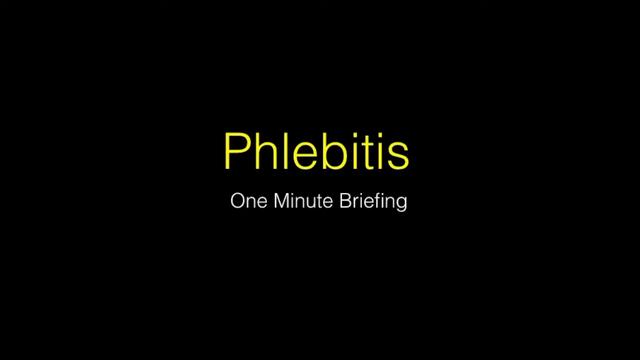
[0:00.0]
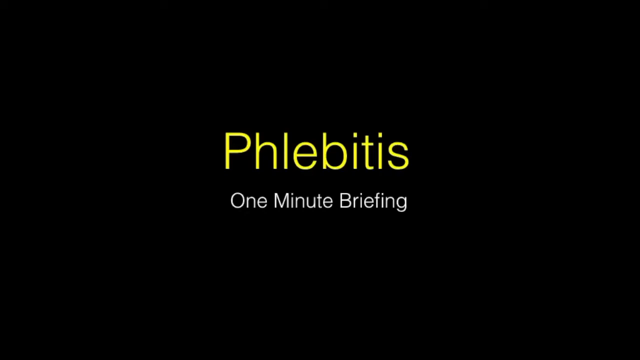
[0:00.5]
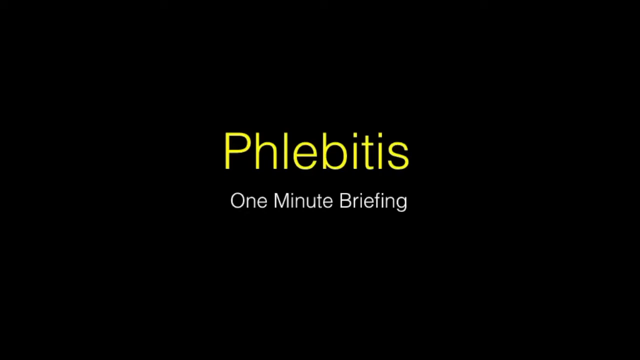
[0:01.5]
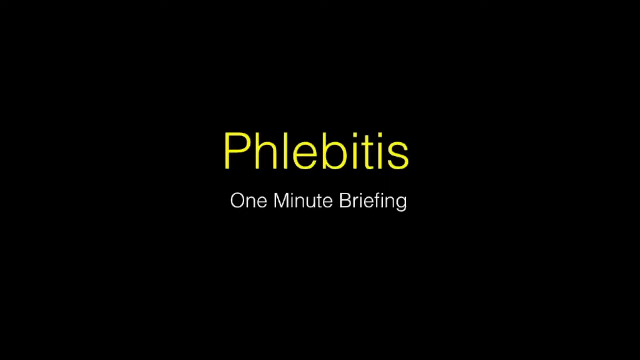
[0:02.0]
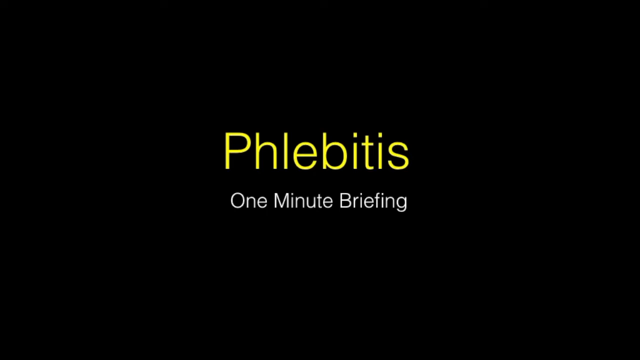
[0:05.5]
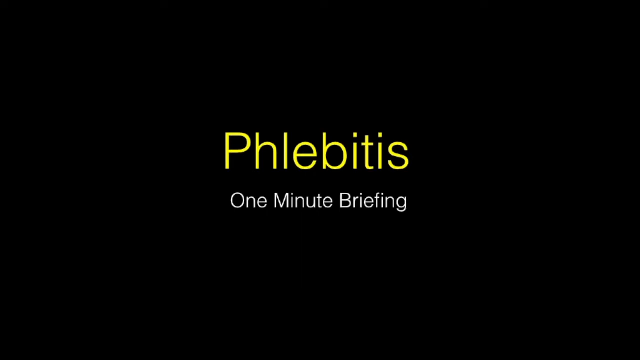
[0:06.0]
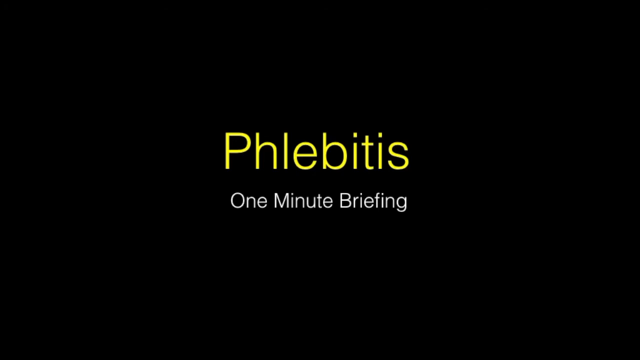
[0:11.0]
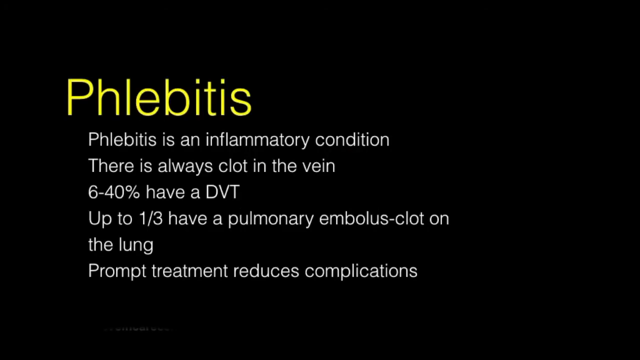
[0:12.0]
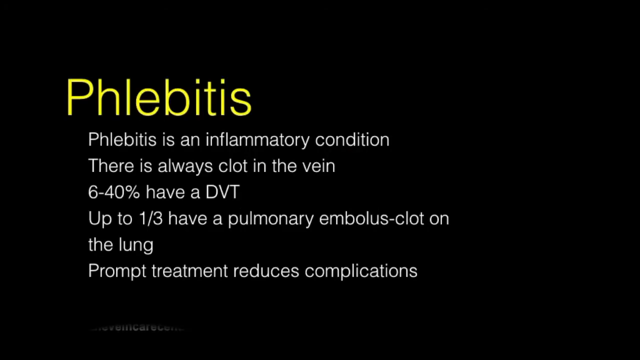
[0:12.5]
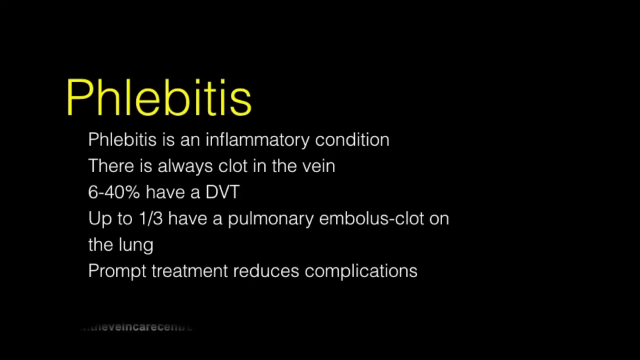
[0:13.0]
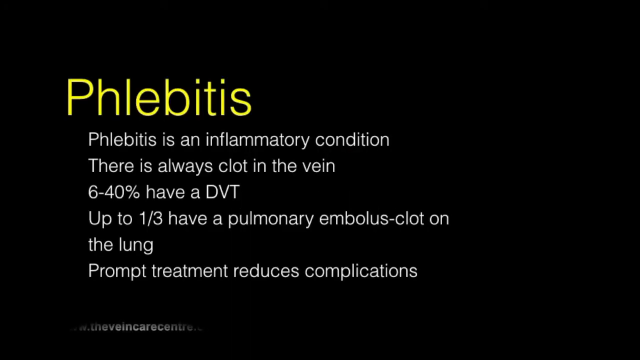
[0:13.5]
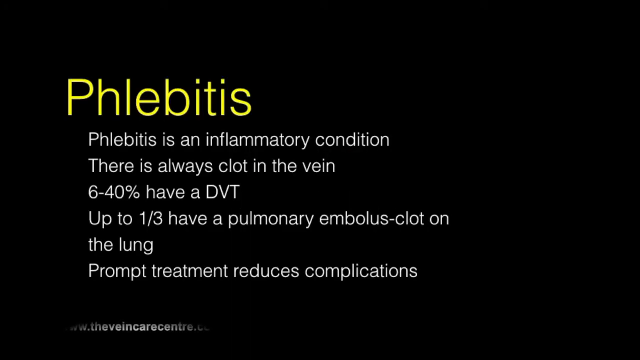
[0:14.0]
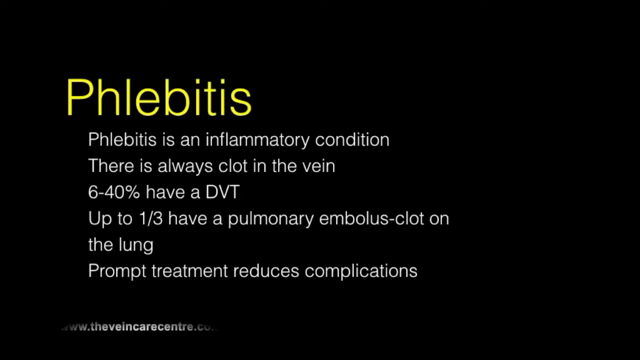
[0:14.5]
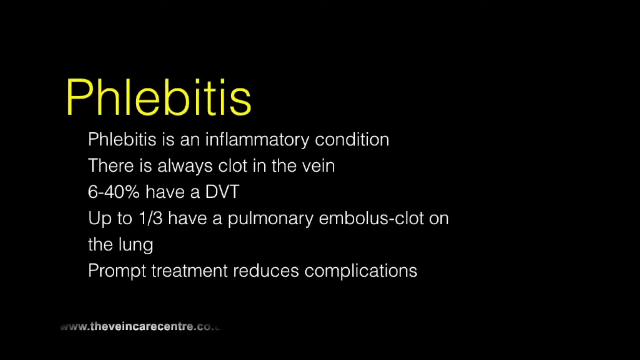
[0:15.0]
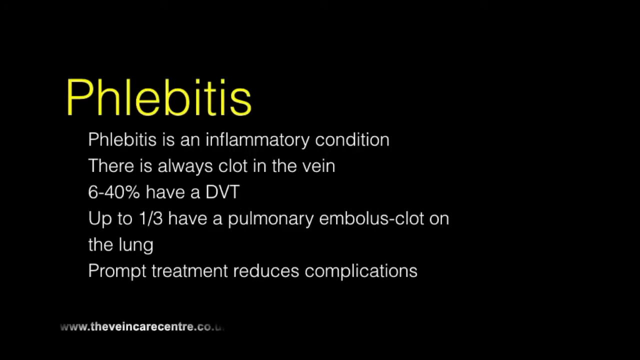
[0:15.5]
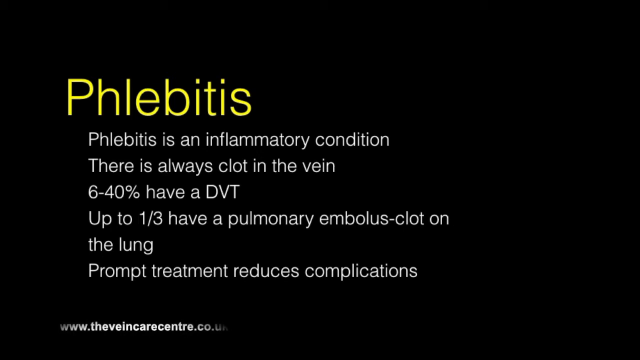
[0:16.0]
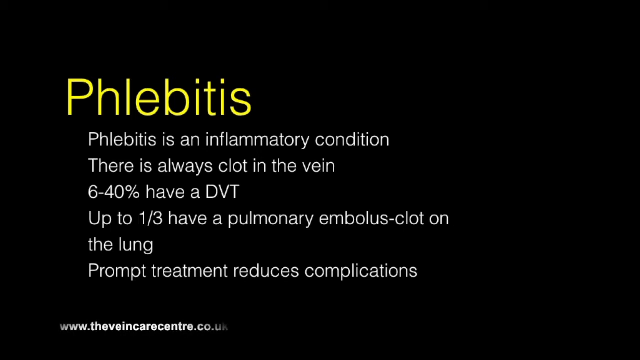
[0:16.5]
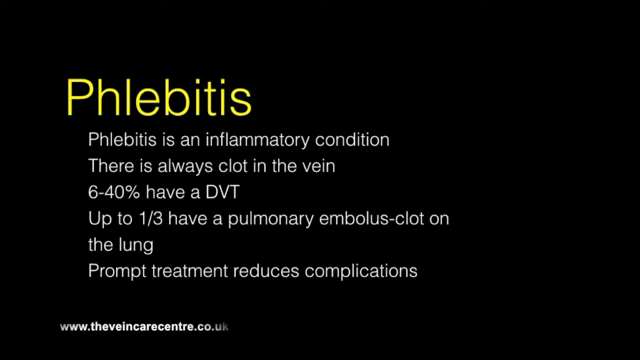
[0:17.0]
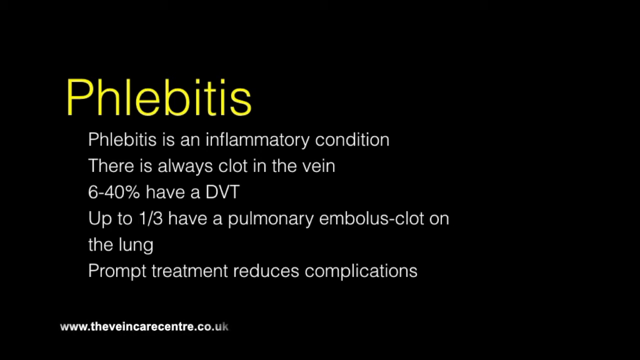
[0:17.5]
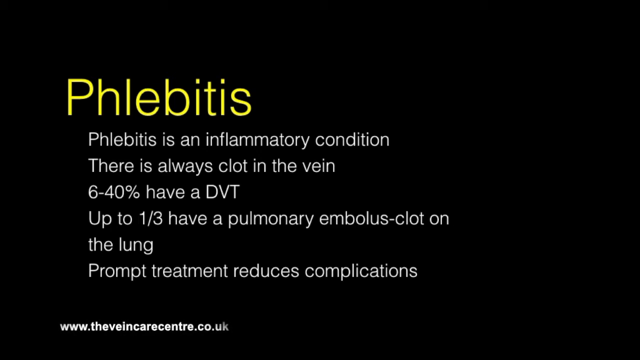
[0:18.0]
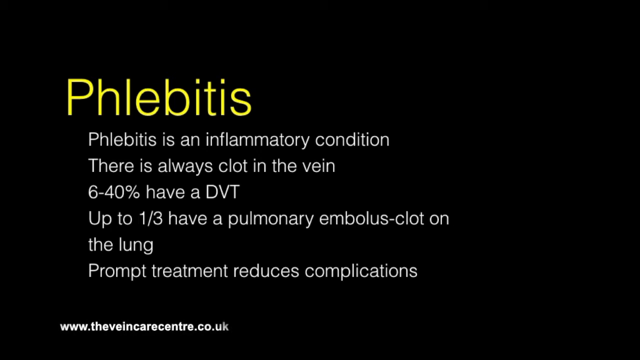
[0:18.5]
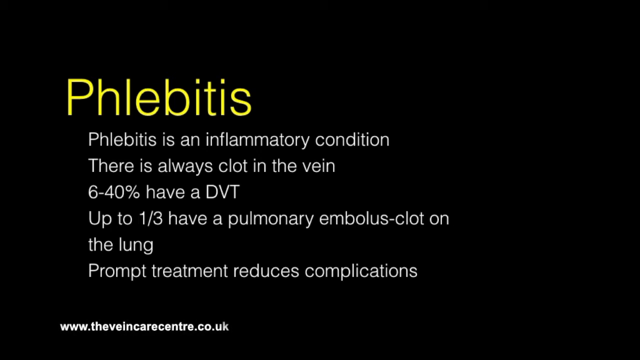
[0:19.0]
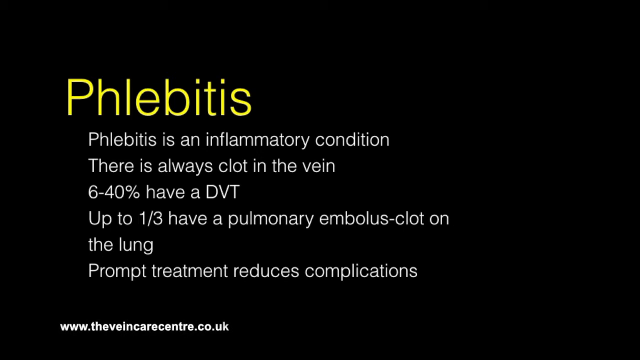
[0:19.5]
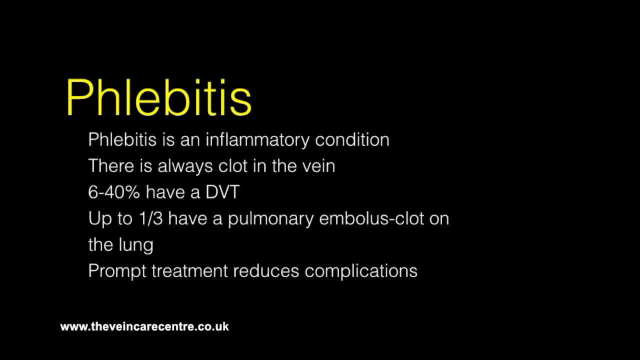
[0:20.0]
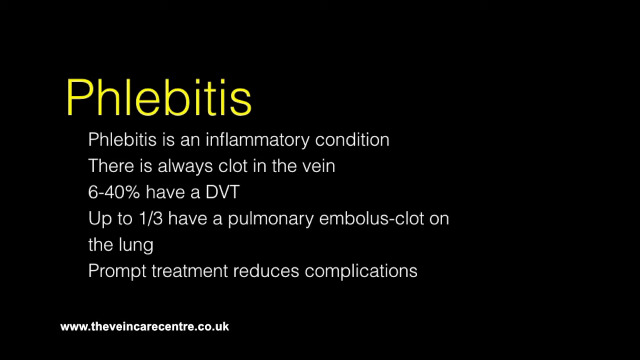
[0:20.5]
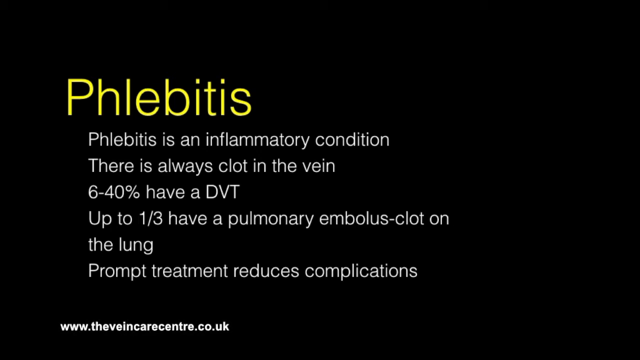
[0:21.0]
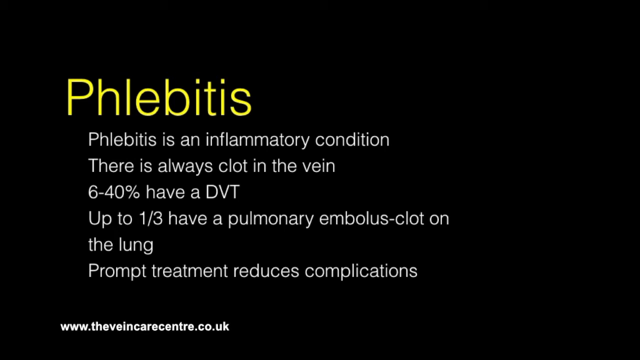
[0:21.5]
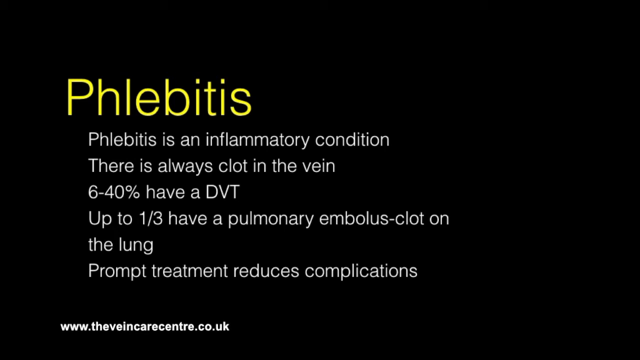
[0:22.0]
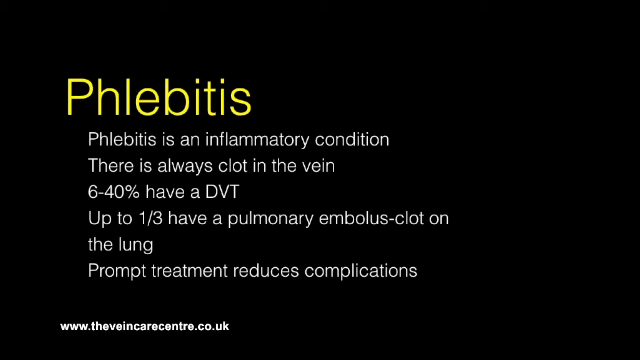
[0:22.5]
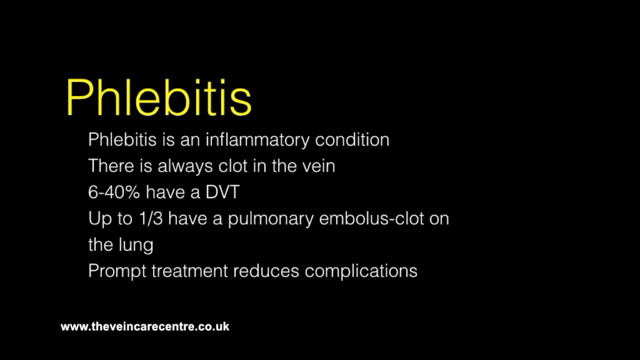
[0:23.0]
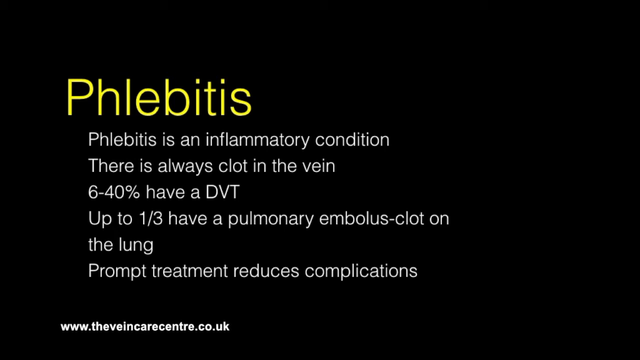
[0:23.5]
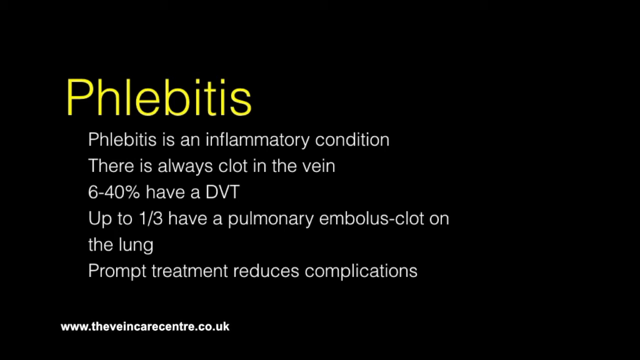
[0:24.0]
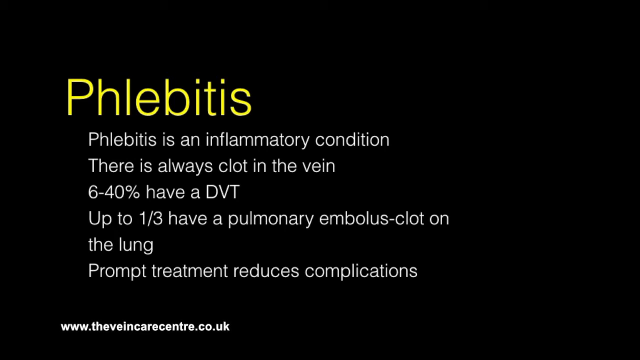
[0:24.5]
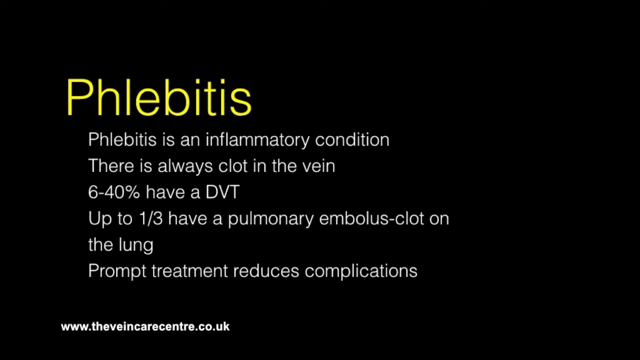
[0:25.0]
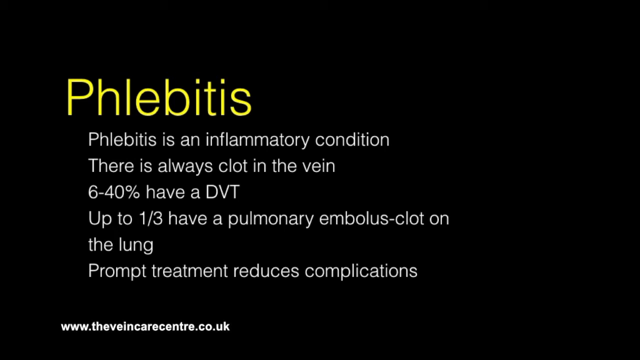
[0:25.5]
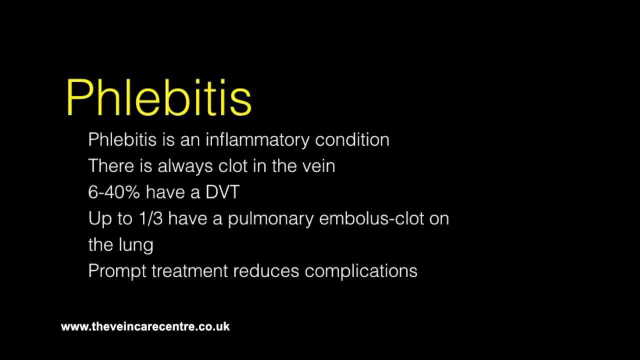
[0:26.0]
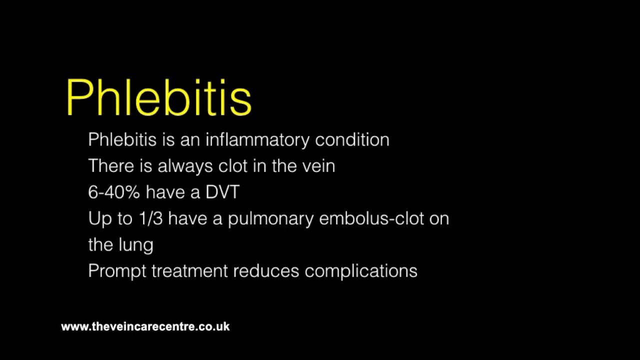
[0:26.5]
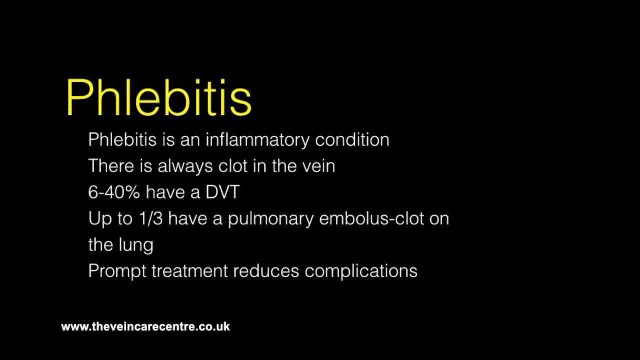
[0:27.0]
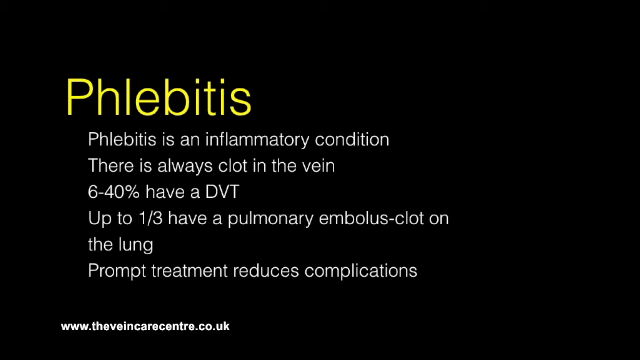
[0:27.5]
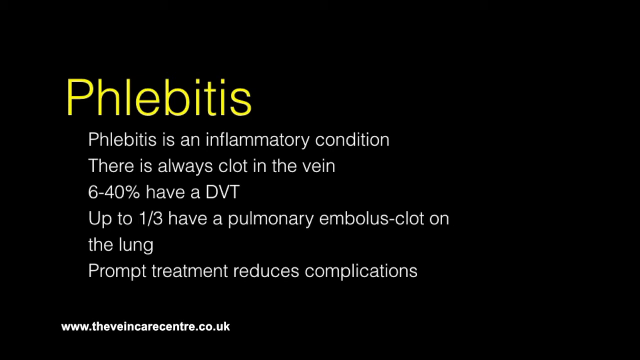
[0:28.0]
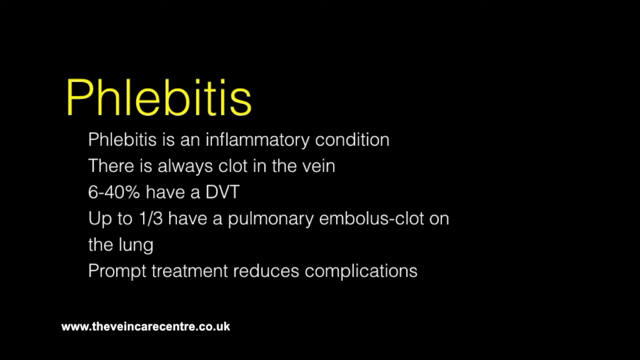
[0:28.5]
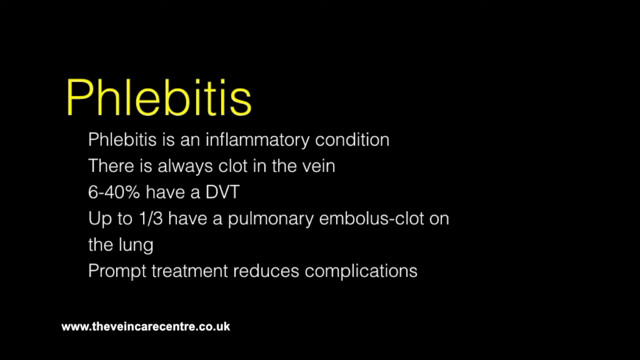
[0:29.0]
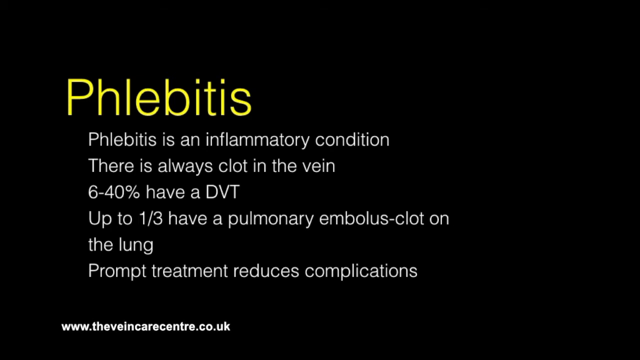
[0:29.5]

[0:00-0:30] A black background shows the word "phlebitis" in yellow, and underneath it, in the middle of the screen, "one minute briefing" appears in white text. The screen then changes to another screen of text, with "phlebitis" in yellow at the top. The text reads "Phlebitis is an inflammatory condition. There is always a clot in the vein. 6 to 40 percent have a DVT. Up to one-third have a pulmonary embolus clot on the lung. Prompt treatment reduces complications." This text stays on screen for a while, and then "WWW.theveincarecentre.co.uk" appears.